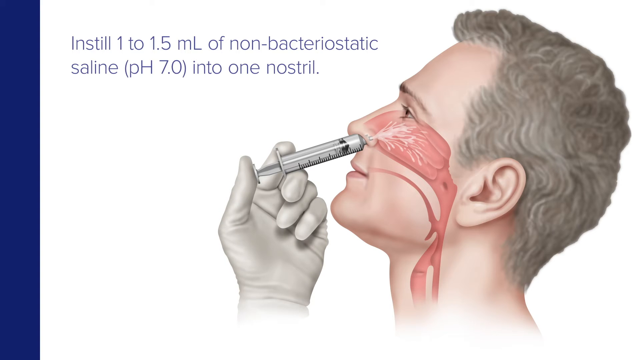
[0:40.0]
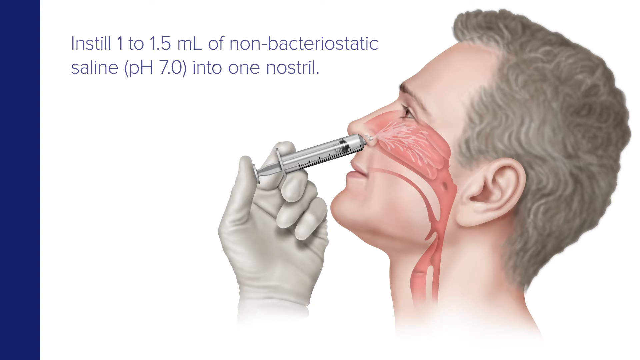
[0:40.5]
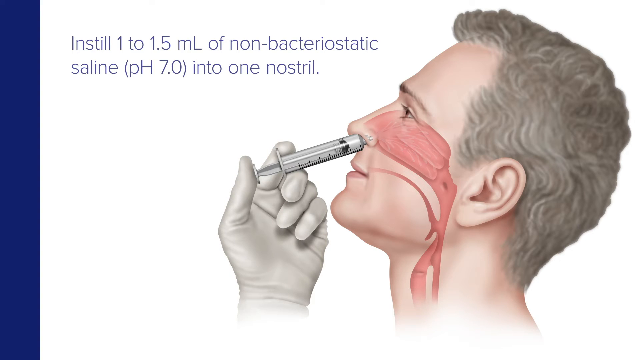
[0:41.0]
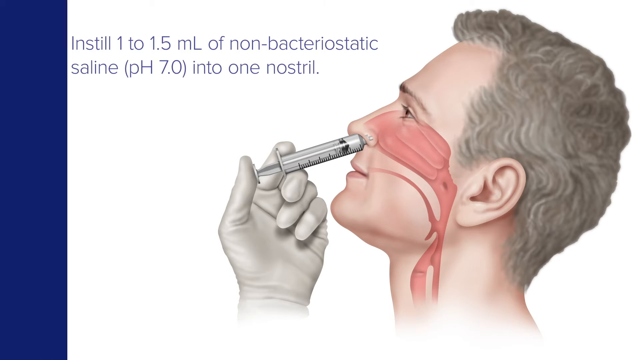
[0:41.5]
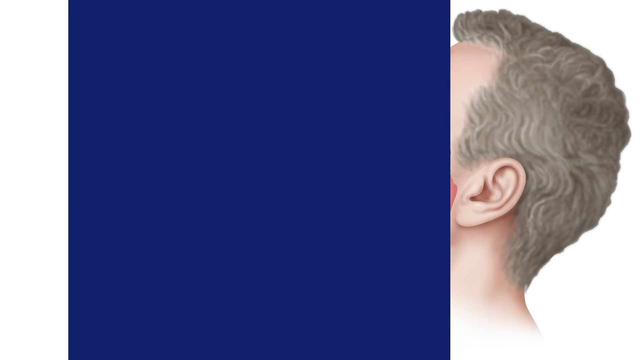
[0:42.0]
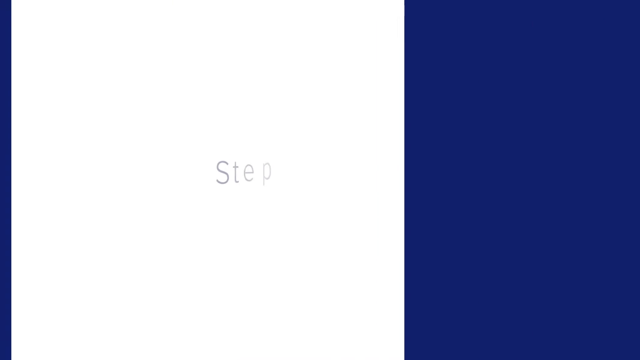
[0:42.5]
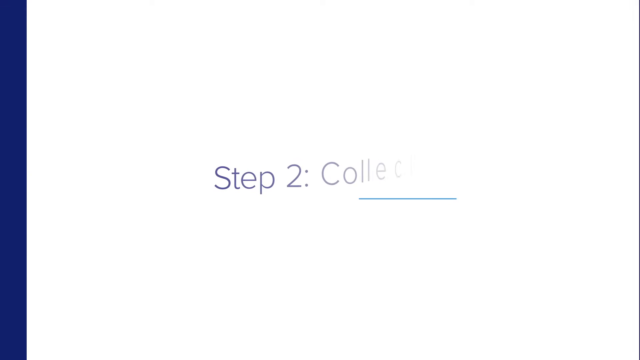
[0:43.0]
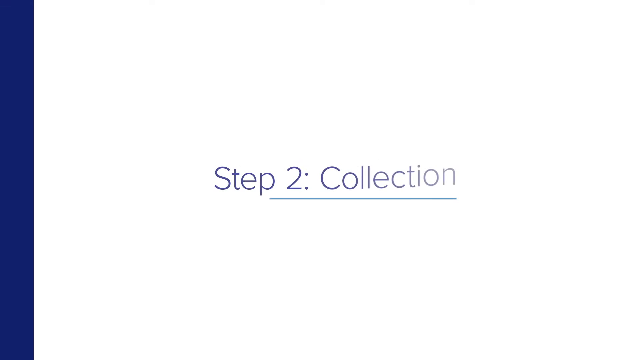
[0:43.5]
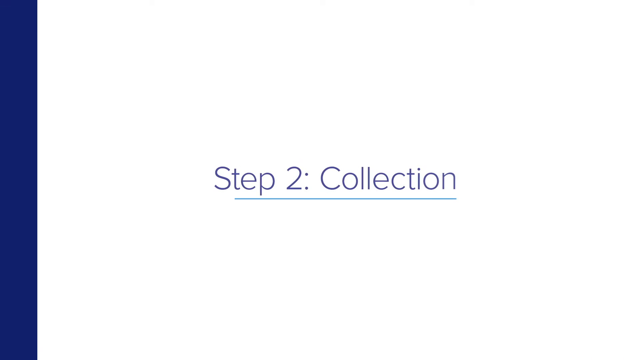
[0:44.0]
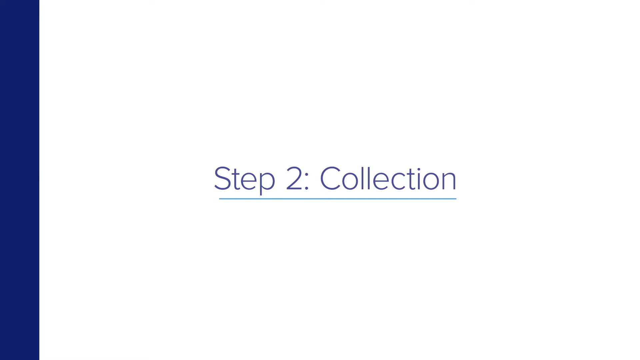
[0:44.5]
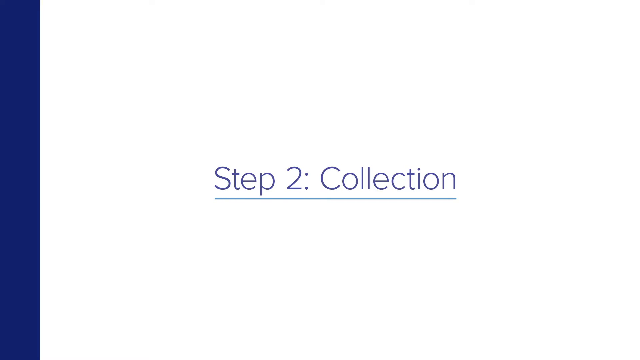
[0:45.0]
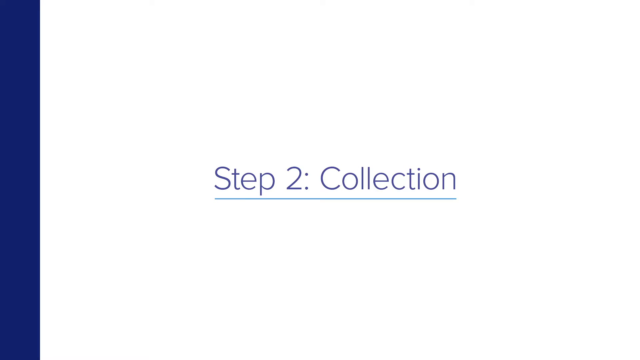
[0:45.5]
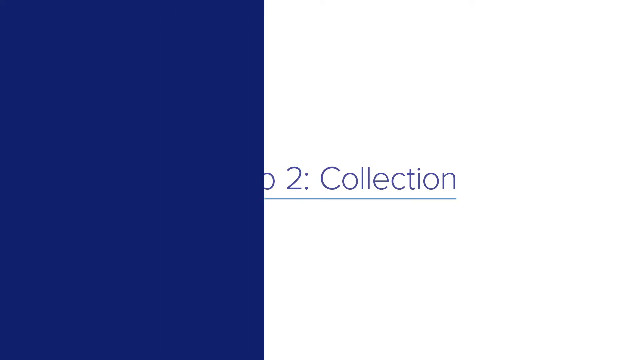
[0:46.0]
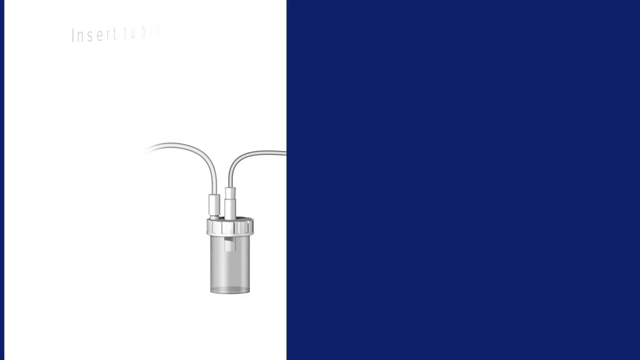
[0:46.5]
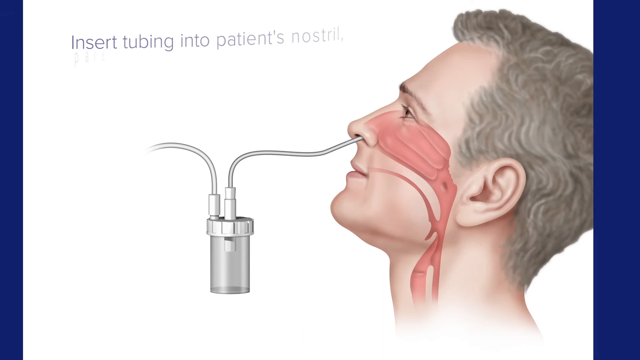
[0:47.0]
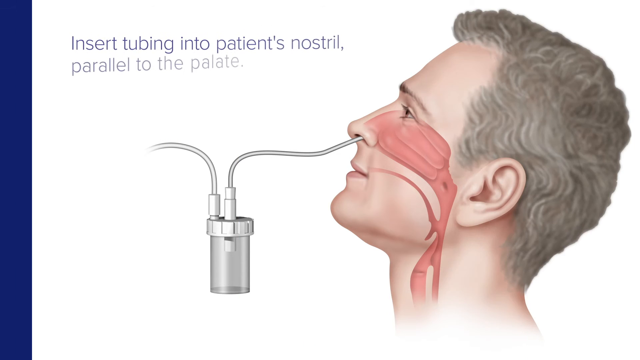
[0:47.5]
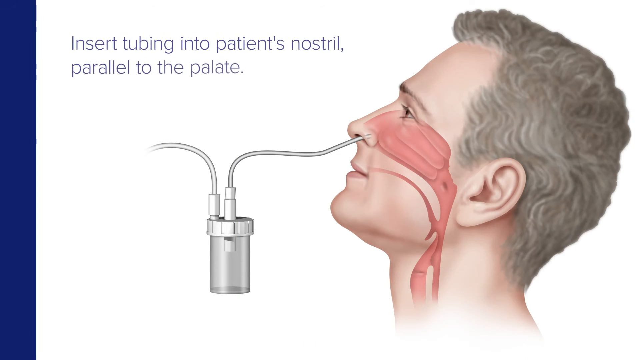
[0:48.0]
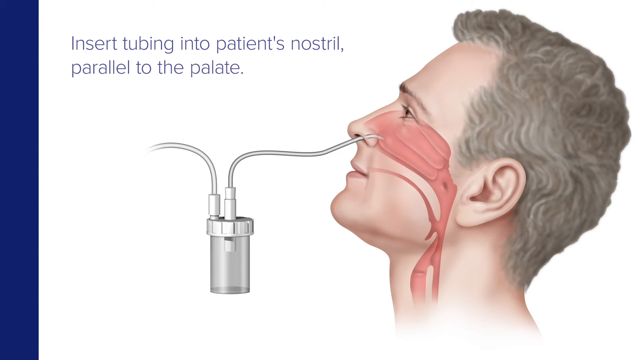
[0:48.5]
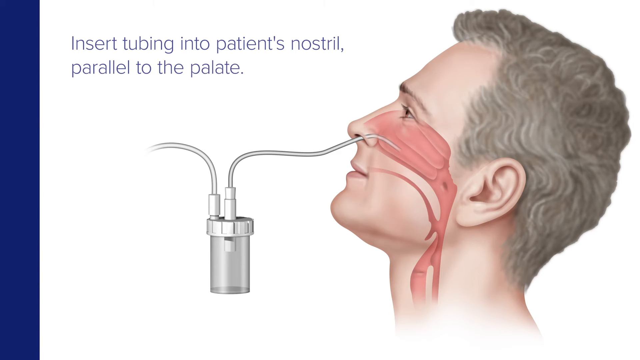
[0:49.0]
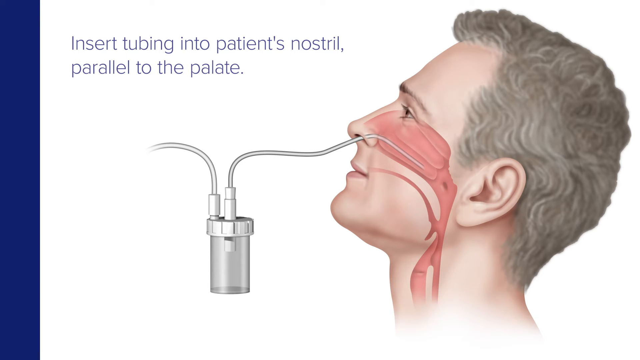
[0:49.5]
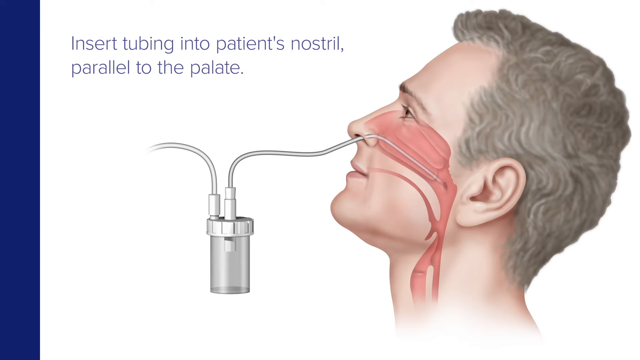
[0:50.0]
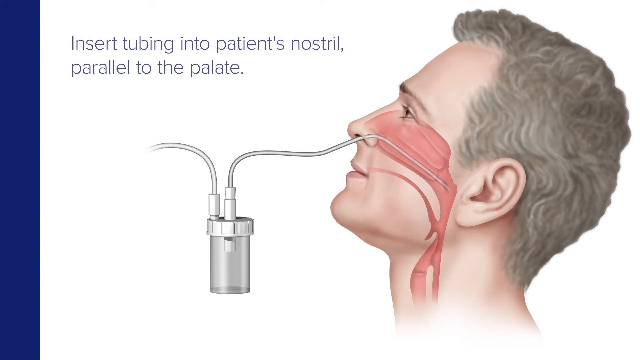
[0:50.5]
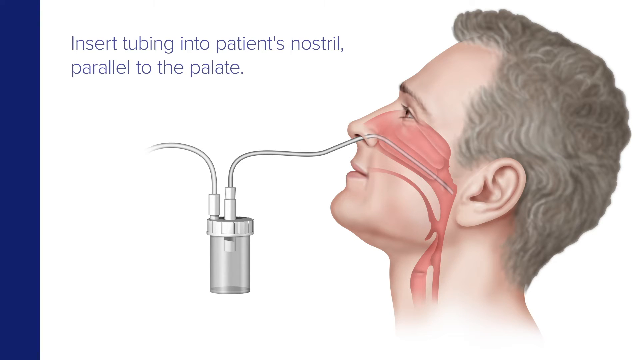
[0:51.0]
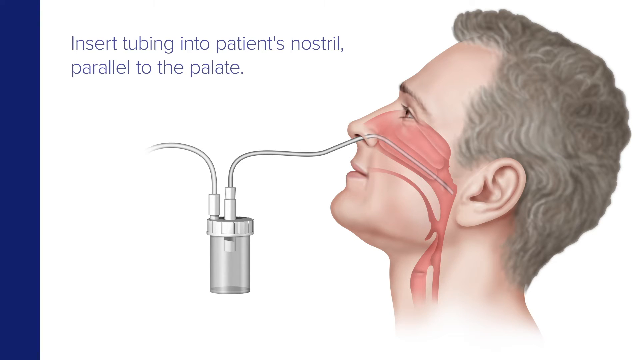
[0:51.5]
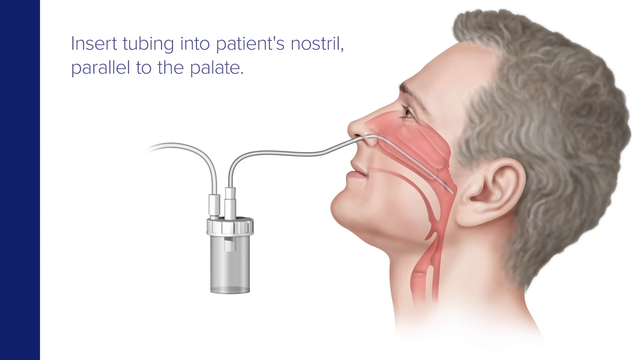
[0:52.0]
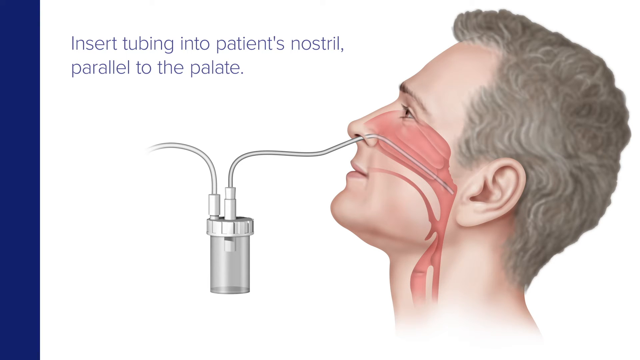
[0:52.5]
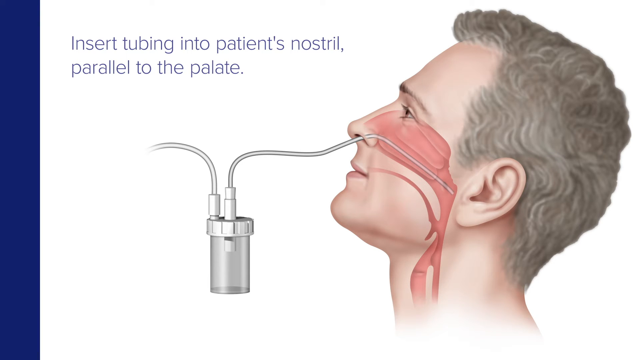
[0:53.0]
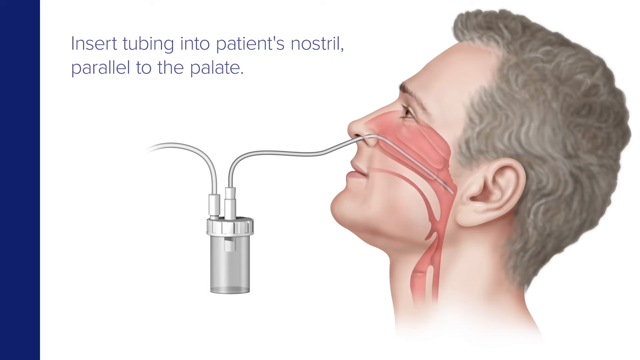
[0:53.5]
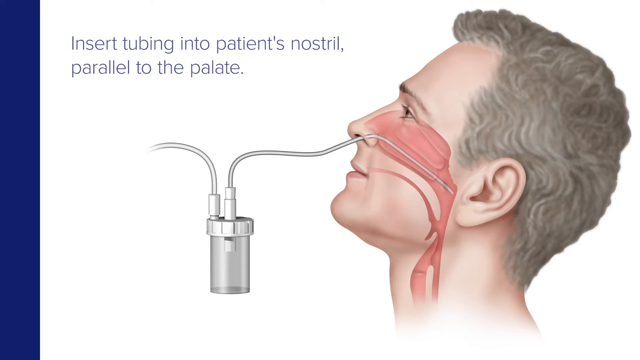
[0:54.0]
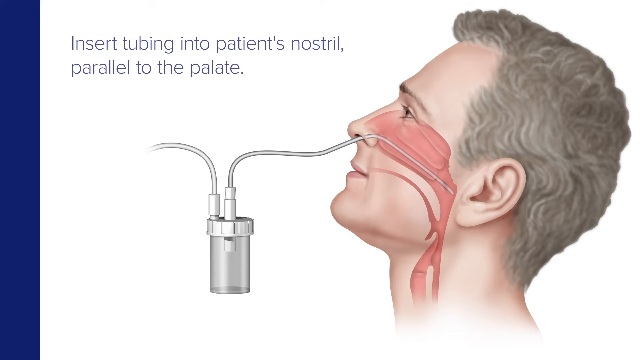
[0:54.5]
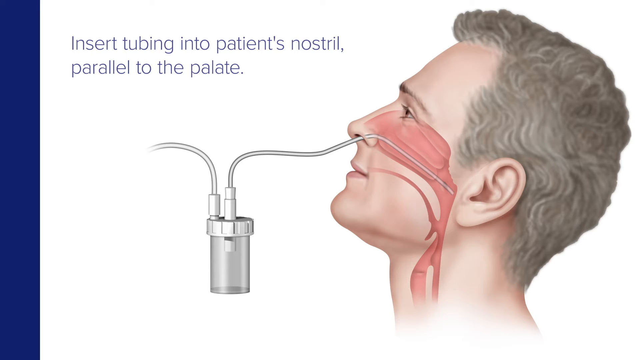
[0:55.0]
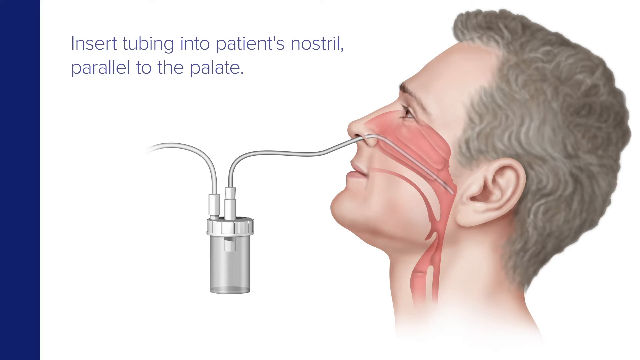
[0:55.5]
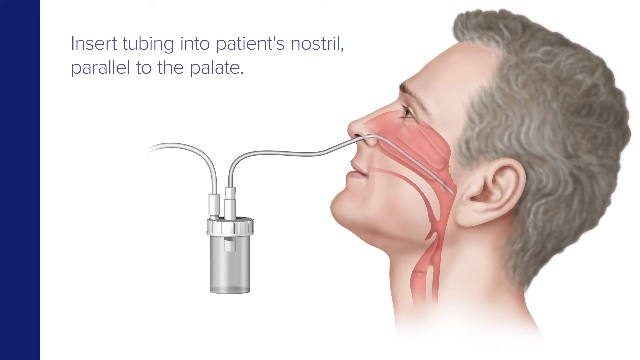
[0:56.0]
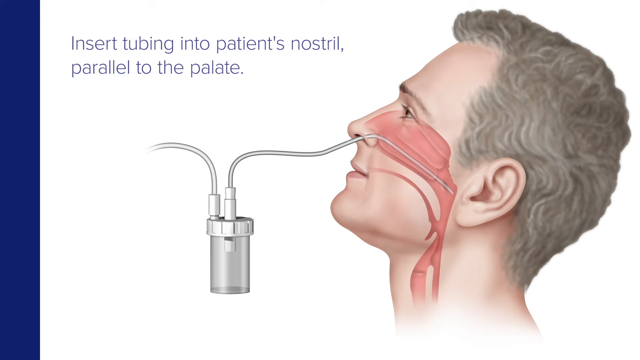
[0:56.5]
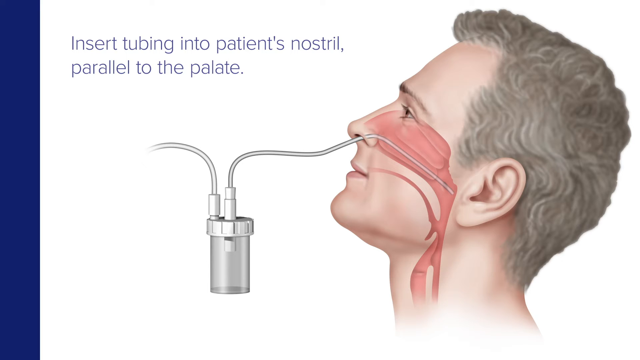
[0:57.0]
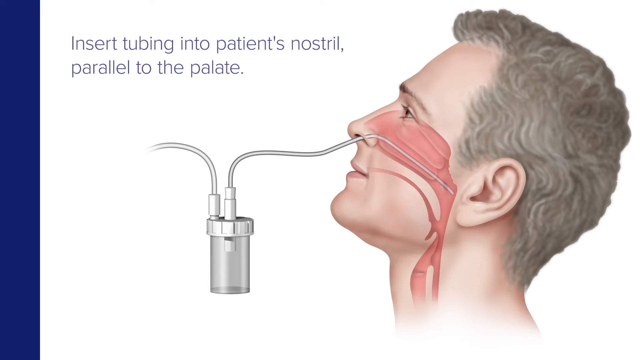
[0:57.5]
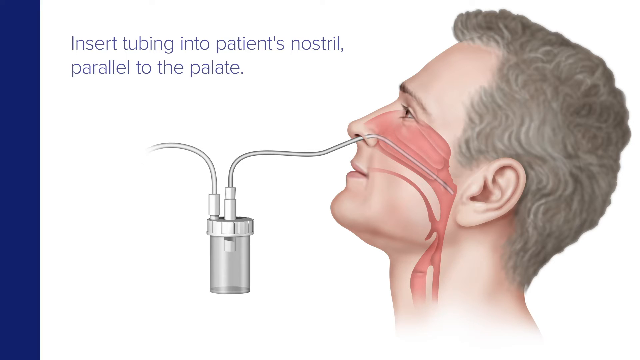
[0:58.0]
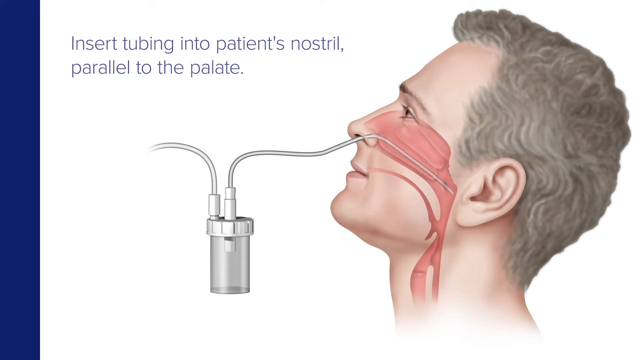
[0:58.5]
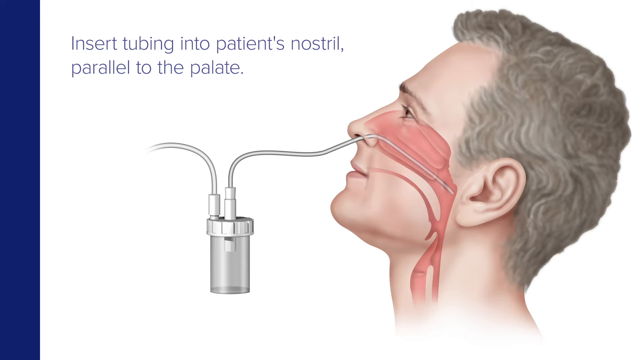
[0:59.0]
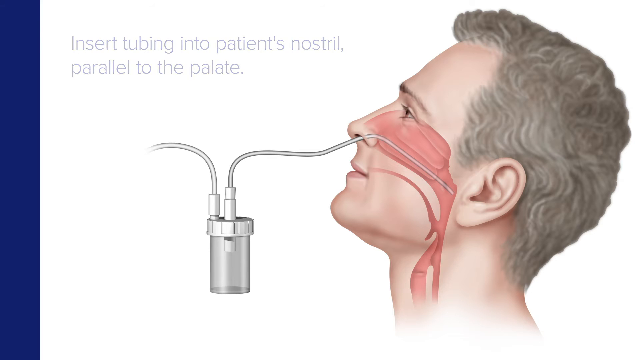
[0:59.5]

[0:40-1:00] The illustrated man leans his head back as saline is put up his nose. Royal blue slides across the screen from left to right to clear it, leaving a white background where thin navy text says "step two collection" with a blue line underneath. Thick blue slides across again, and the man is shown in the same position, seen from about the bottom of the neck up, the left side of his head visible and his head leaning slightly back. Illustrations of anatomy are visible in his cheeks and down the front of his neck. The small medicine-bottle-like device with two tubes is there; one tube is up his nose and the other fades out and ends. Words above say "insert tubing into patient's nostril parallel to the palate." The tube in his nostril is then shown being put much further in, almost reaching his ear.